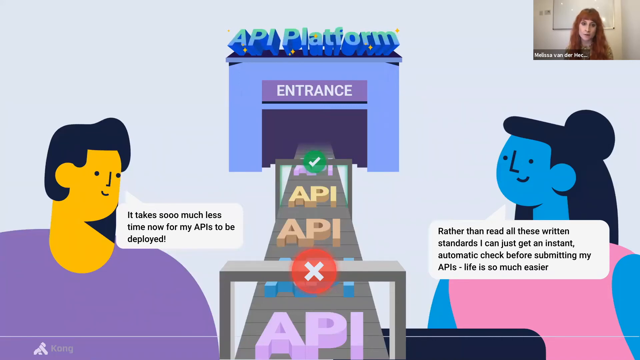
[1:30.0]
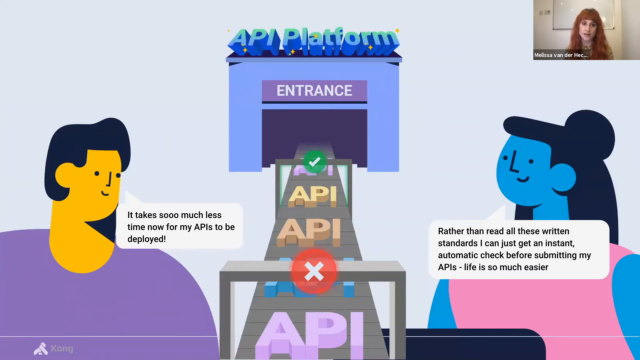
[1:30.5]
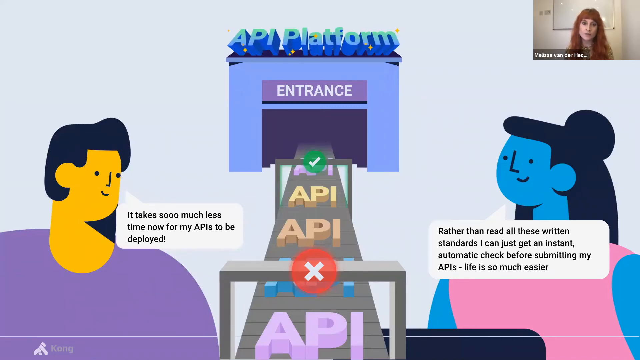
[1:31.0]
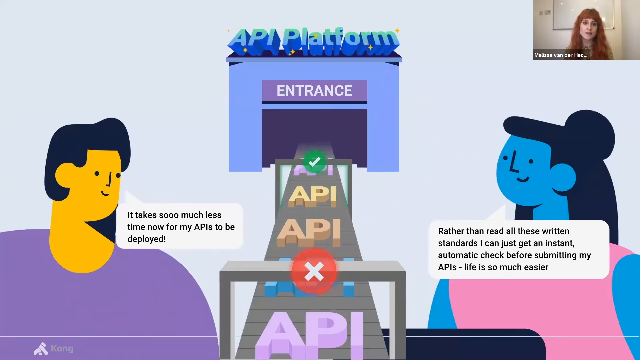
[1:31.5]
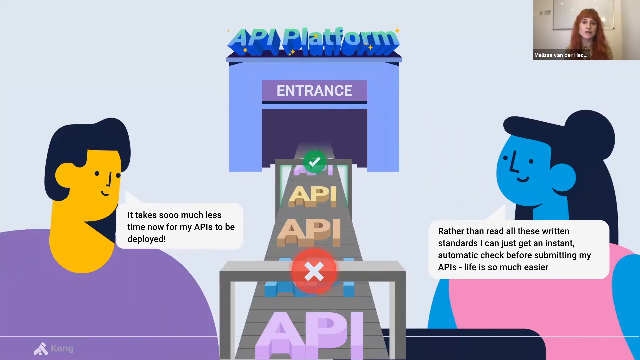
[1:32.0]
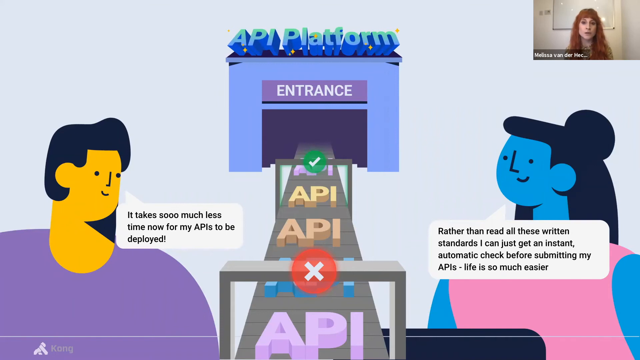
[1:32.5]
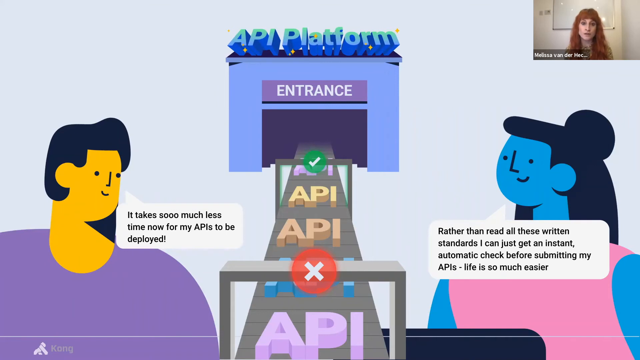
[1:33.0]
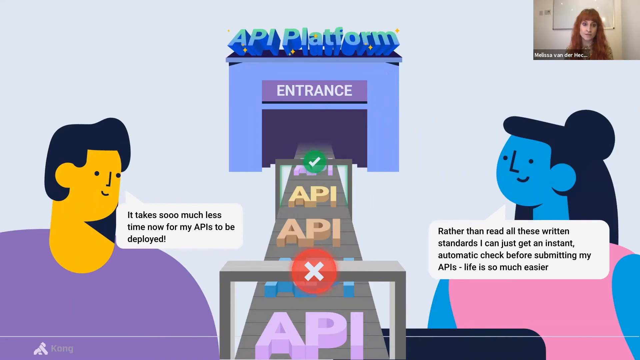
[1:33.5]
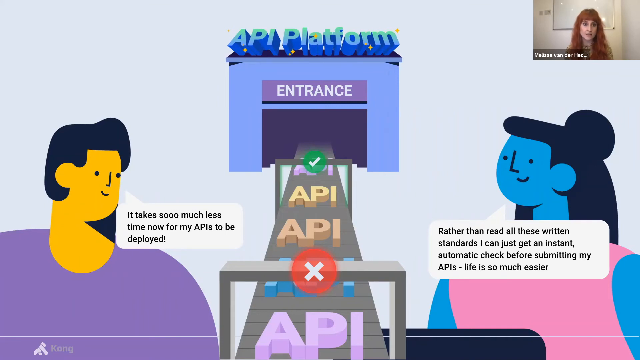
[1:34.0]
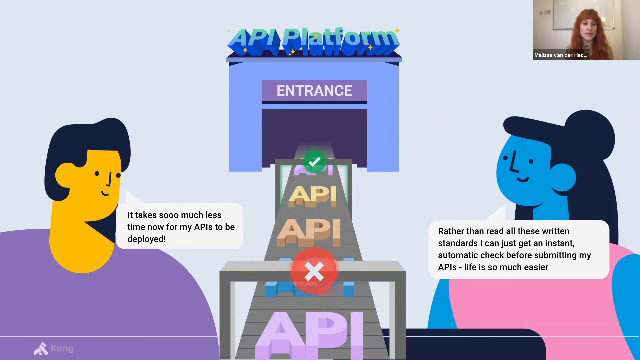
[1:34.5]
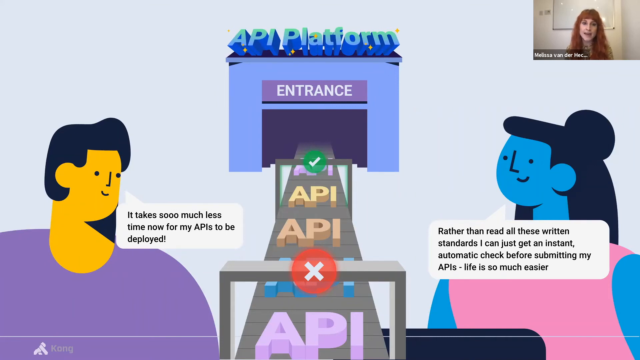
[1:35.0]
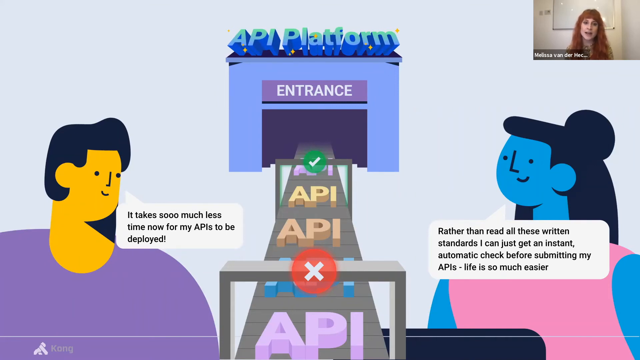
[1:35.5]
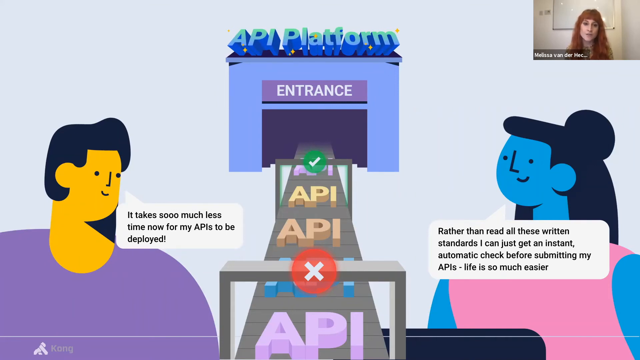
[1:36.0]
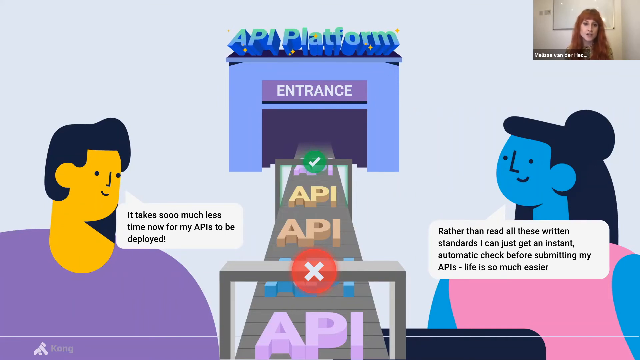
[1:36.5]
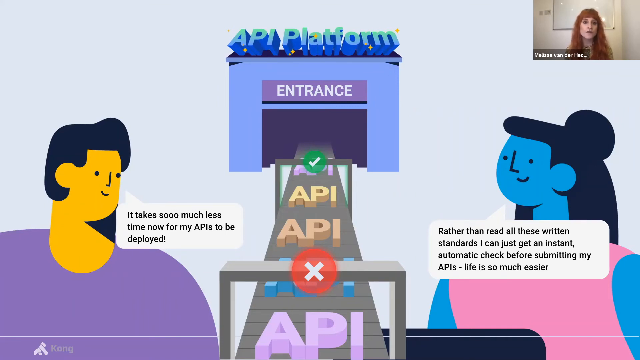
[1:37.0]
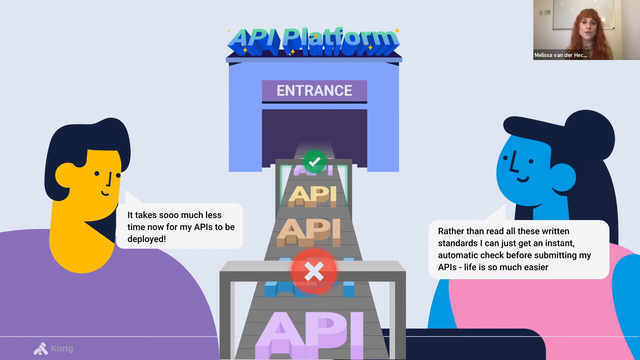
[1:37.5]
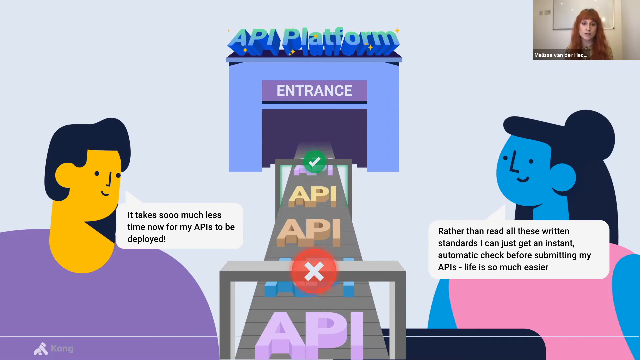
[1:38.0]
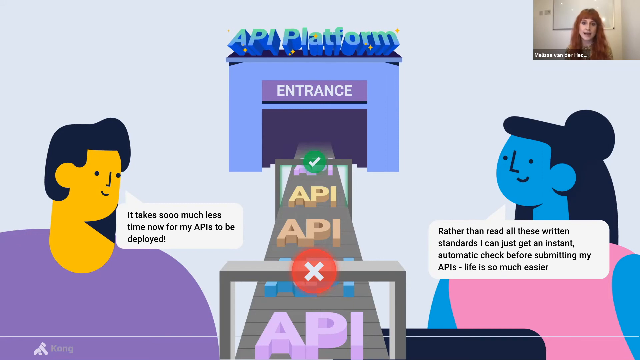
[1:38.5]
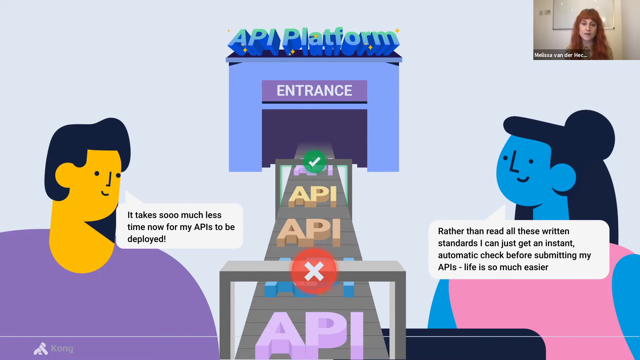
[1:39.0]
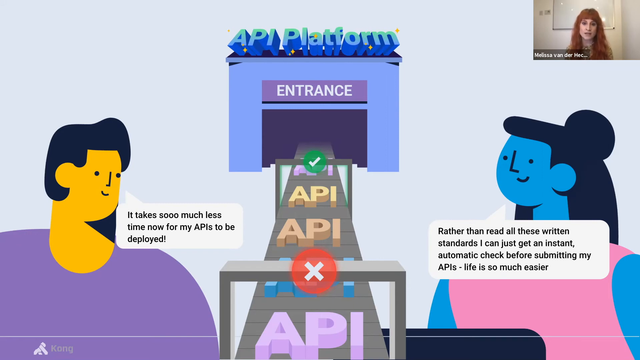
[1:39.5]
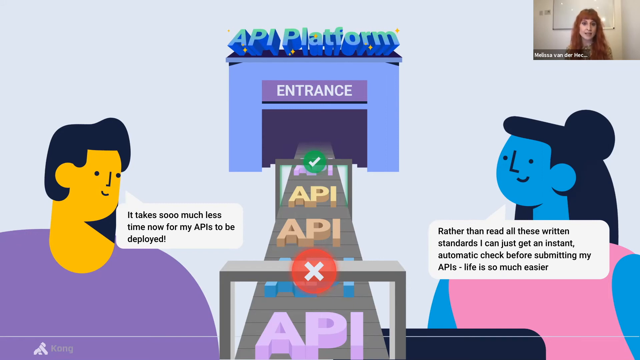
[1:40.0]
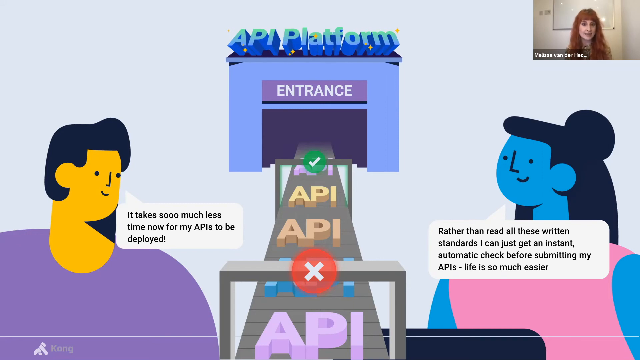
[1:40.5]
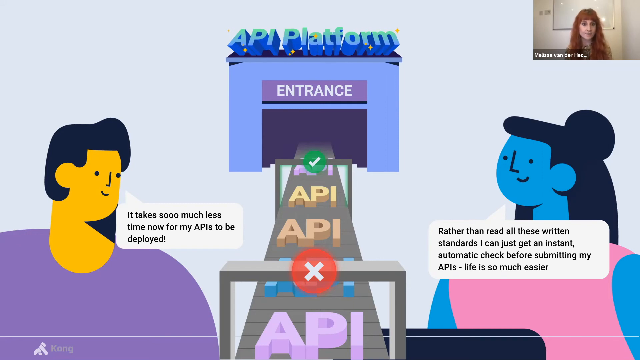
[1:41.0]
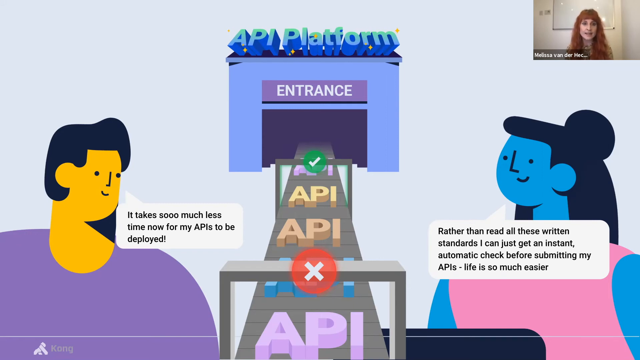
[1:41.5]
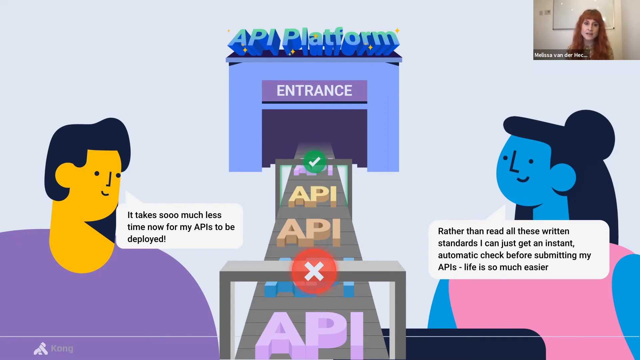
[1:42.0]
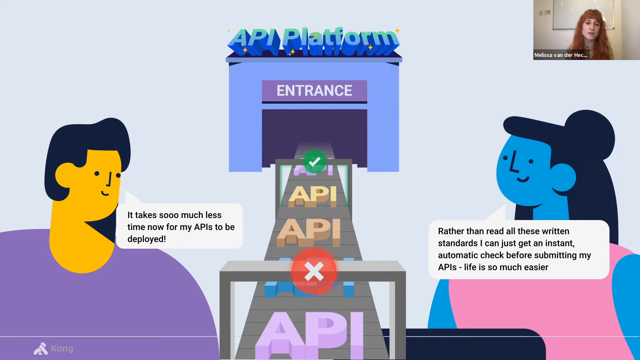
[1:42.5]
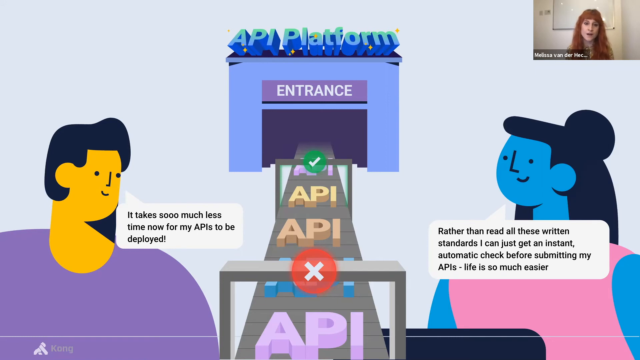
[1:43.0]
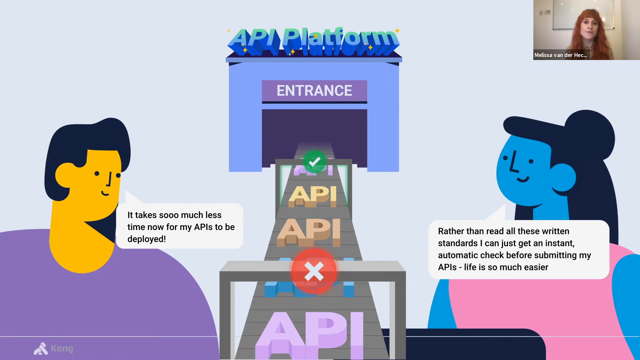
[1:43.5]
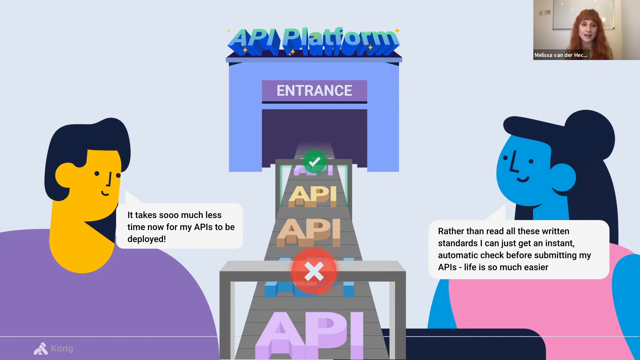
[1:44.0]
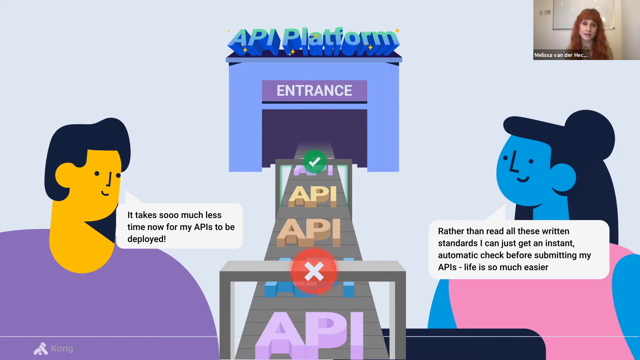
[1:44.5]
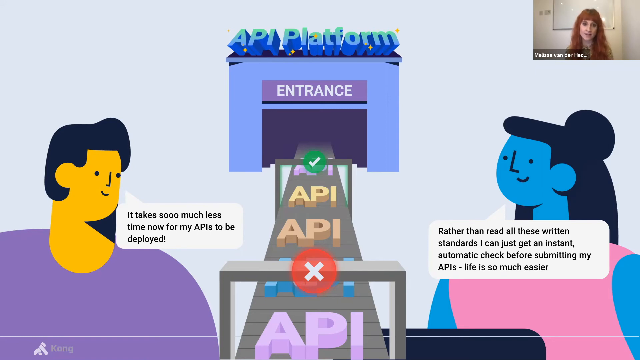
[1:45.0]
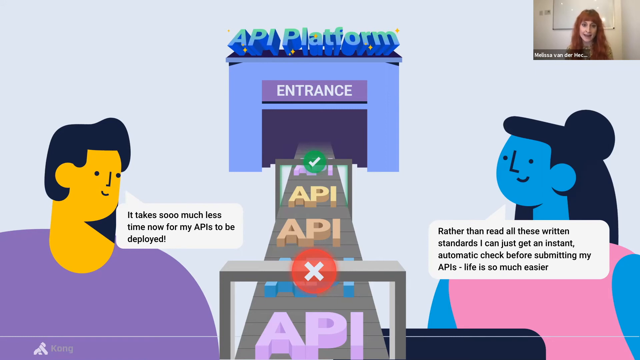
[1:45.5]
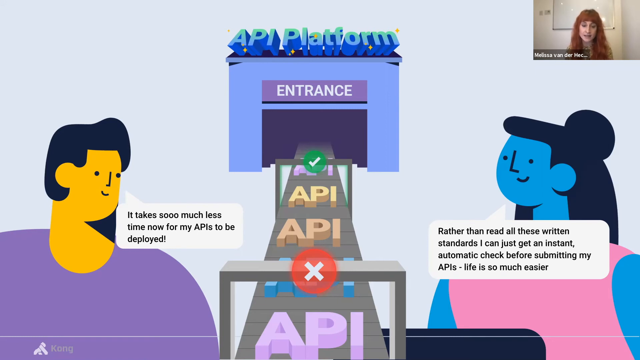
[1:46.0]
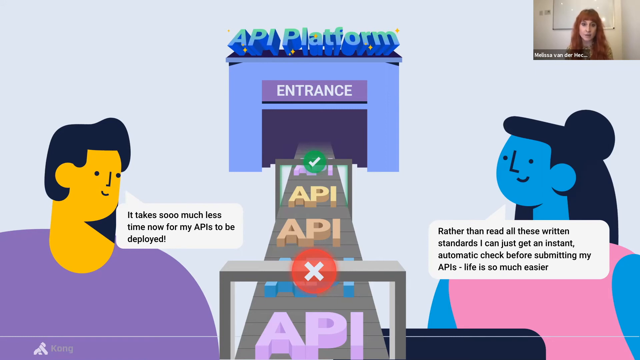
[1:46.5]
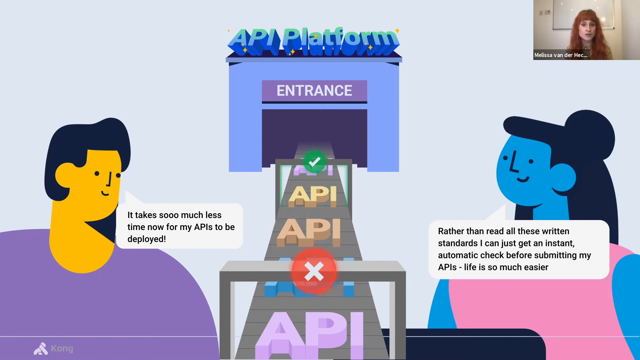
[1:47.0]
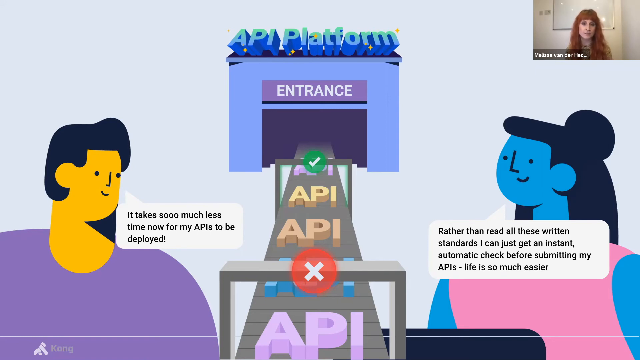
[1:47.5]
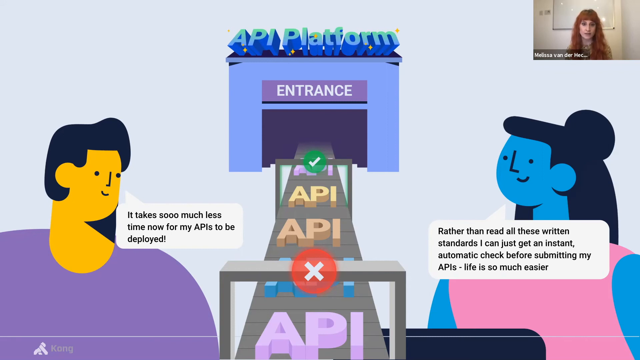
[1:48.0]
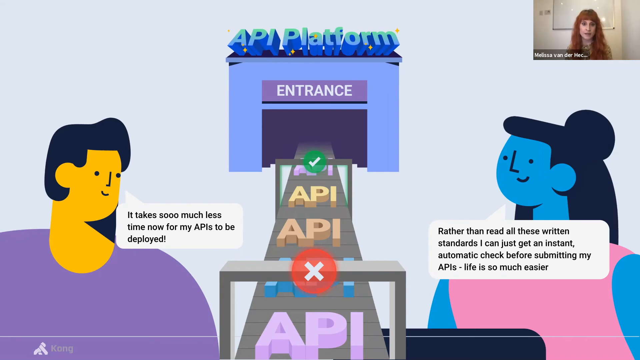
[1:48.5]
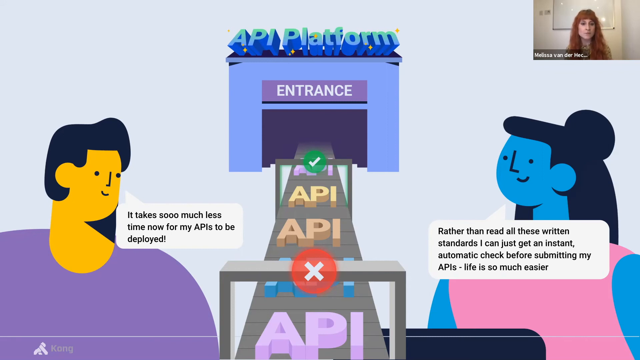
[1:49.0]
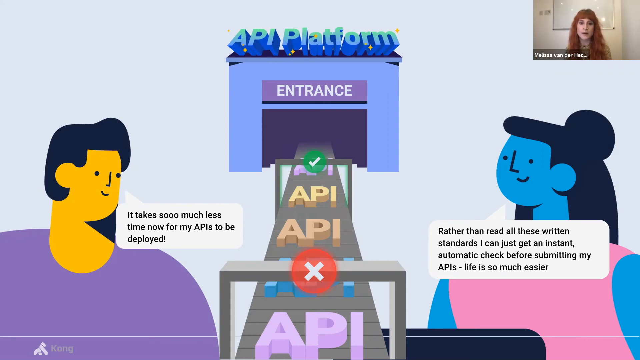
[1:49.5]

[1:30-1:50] Nothing really changes. The PowerPoint slide shows an assembly line with two vector drawings on either side, each with a piece of dialogue. In the top right-hand corner is video of a woman who seems to be presenting the slide. She is in a room with blank white walls, with a blank whiteboard behind her. She has long, wavy reddish hair with thick bangs and pale skin, and she nods her head slightly as she speaks. She seems to be on a Zoom recording: in the bottom left-hand corner of her video square is white text that appears to be her name, but it is too small to read.